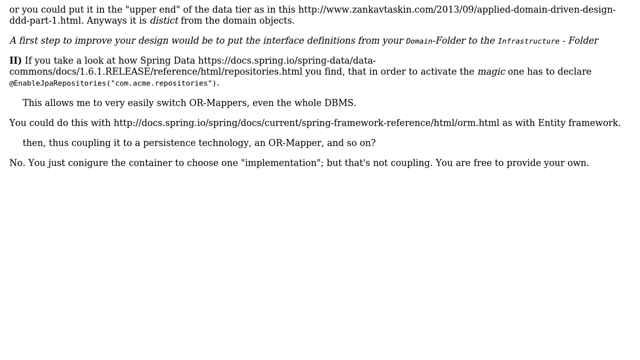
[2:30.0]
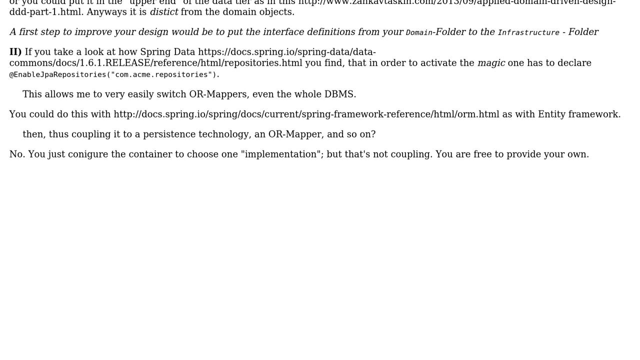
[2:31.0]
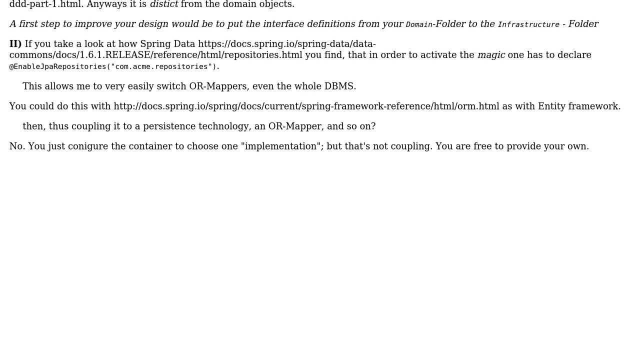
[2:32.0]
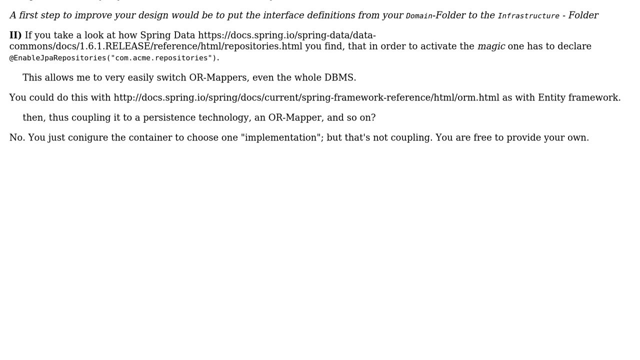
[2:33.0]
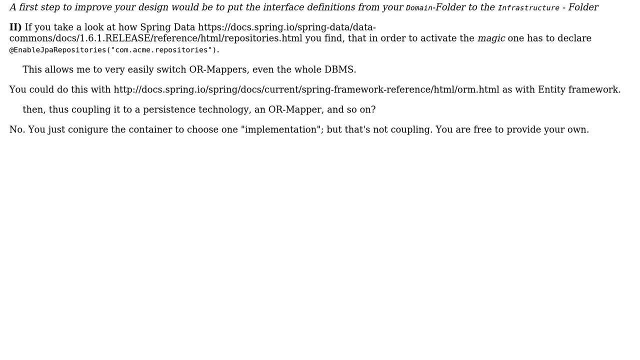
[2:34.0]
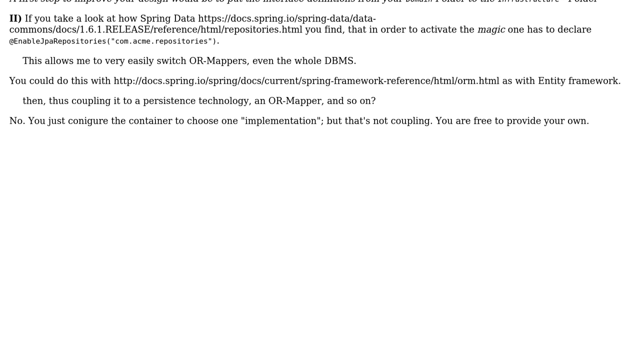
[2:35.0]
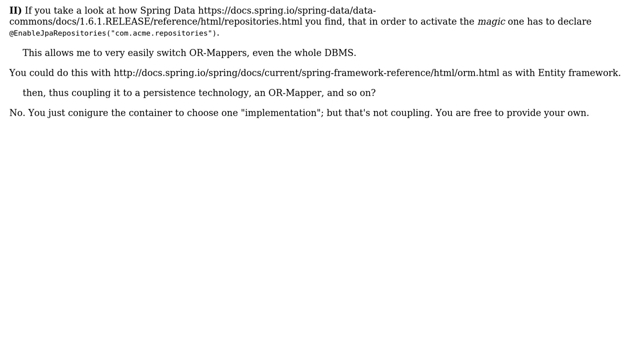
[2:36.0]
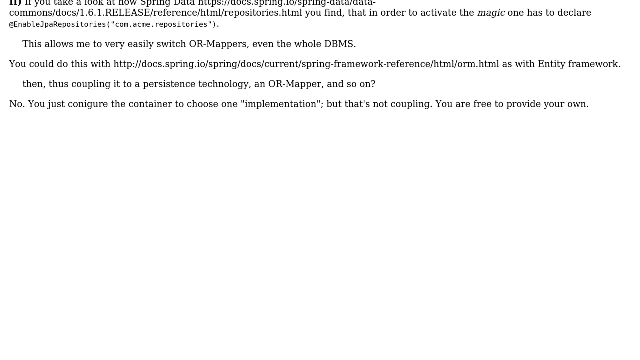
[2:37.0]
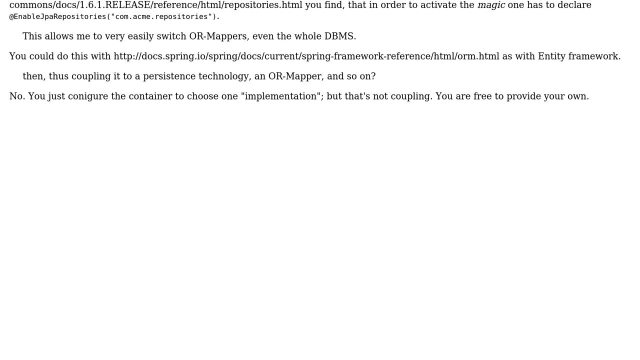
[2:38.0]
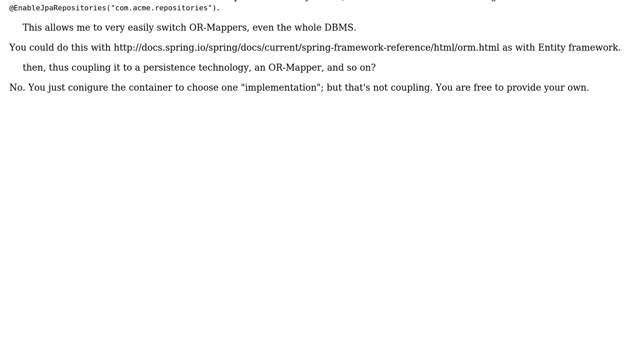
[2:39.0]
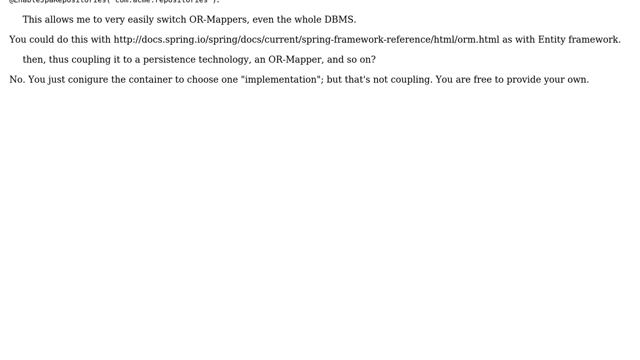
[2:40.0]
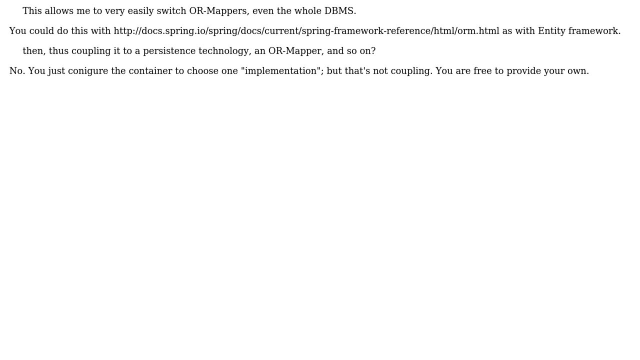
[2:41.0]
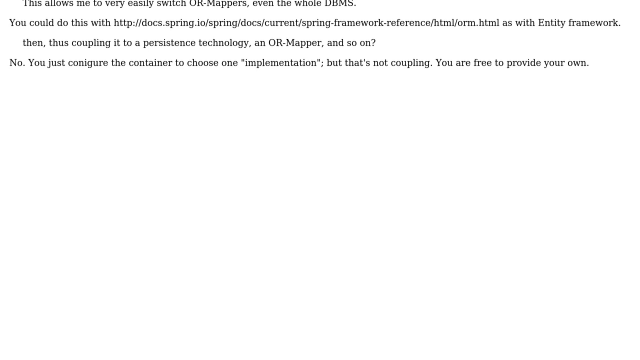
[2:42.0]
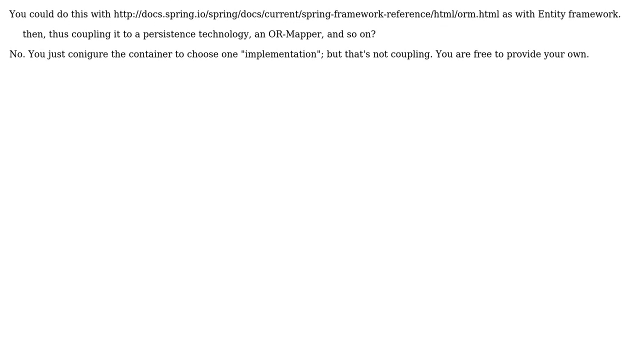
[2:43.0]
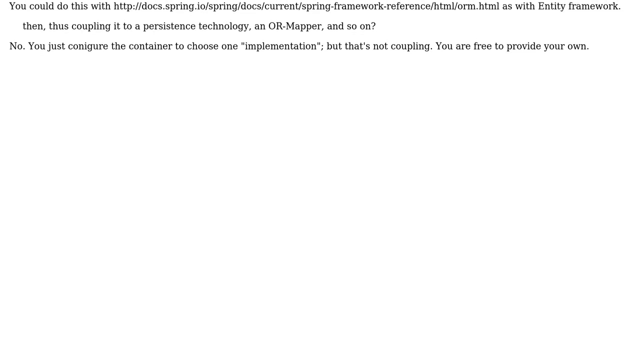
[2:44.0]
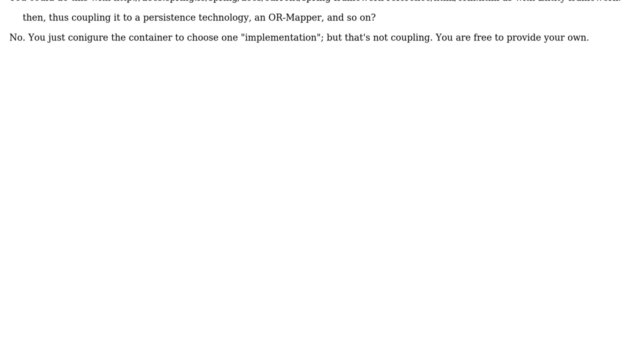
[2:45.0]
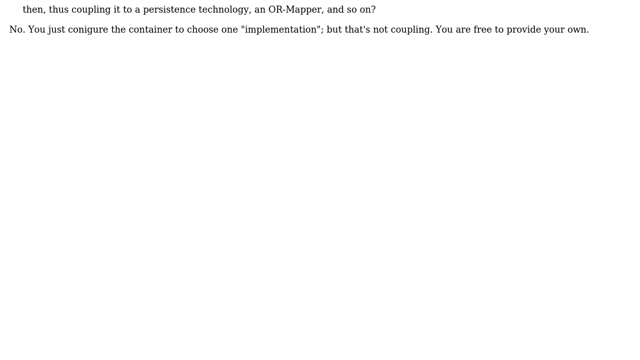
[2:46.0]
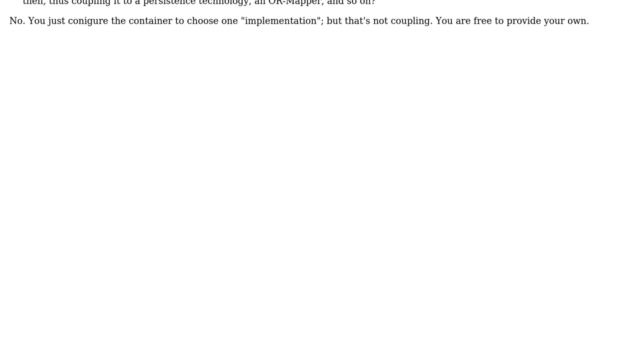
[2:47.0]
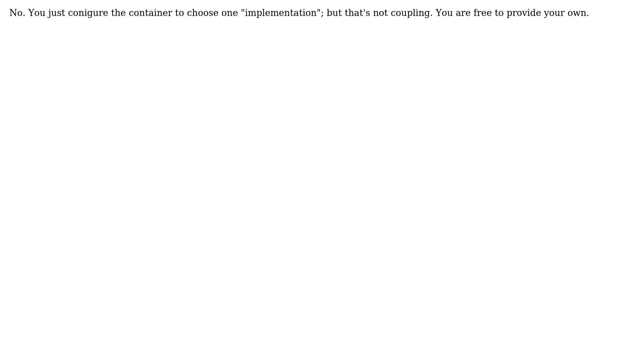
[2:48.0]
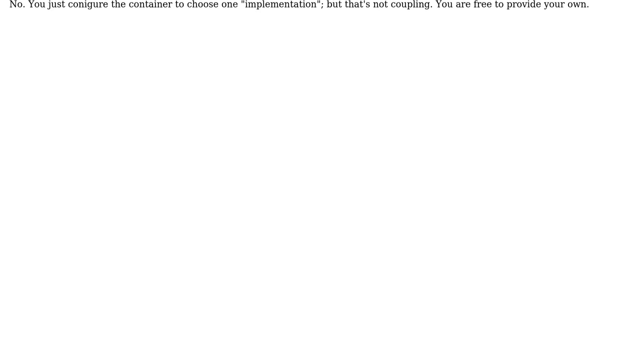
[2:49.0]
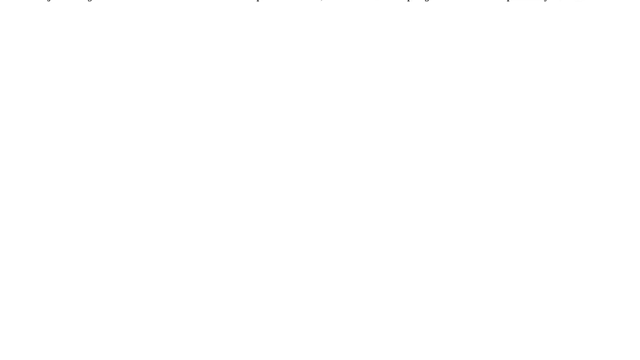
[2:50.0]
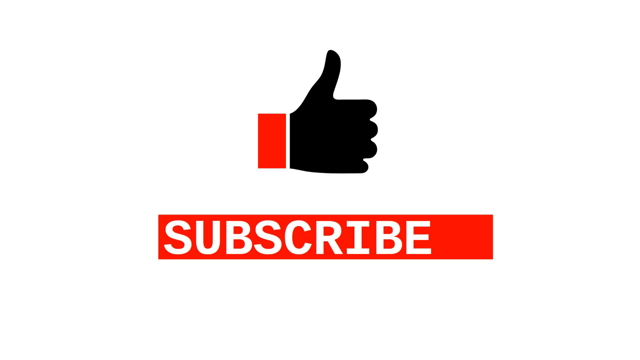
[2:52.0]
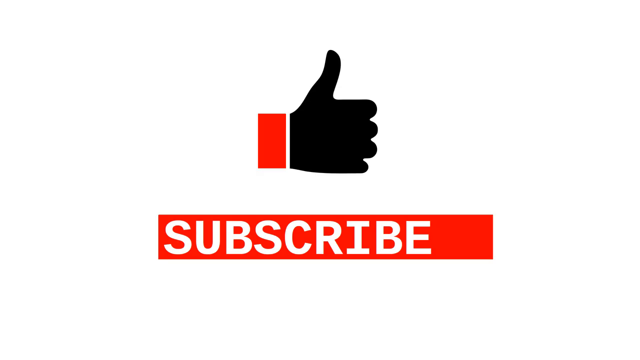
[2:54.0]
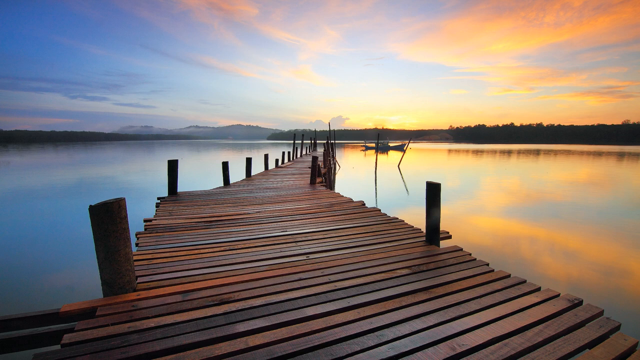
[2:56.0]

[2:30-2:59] The rest of the response appears. Point 2 begins "If you take a look at how Spring Data" followed by a docs.spring.io link, then "you find that in order to activate the magic", with "magic" in italics. Further text includes the quoted line "This allows me to very easily switch OR mappers, even the whole DBMS", another docs.spring.io link, and a question about coupling to a persistence technology and OR mapper. The answer then reads "No, you just configure the container to contain the implementation, but that's not coupling. You are free to provide your own."